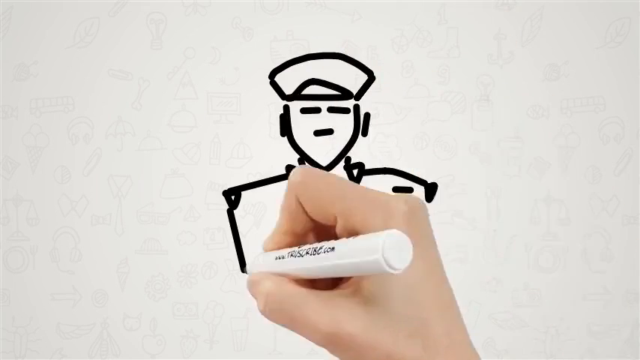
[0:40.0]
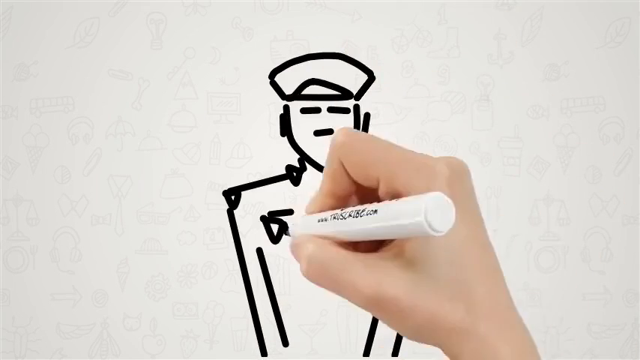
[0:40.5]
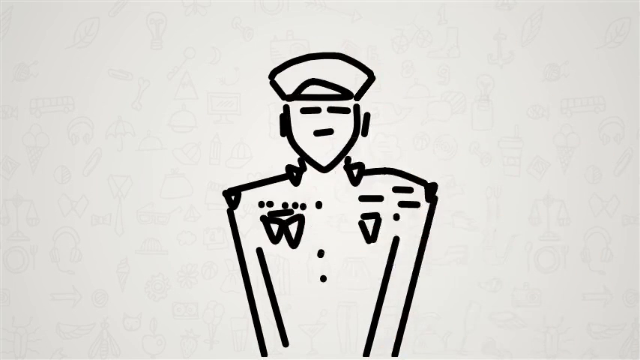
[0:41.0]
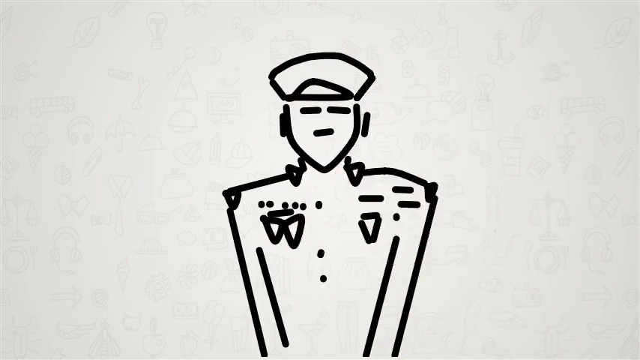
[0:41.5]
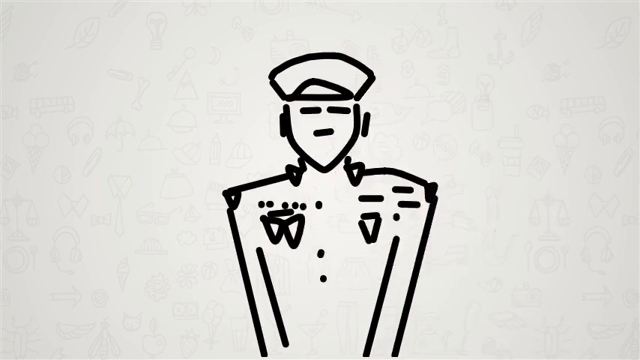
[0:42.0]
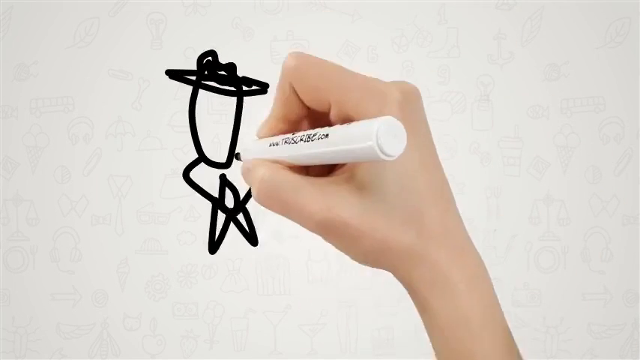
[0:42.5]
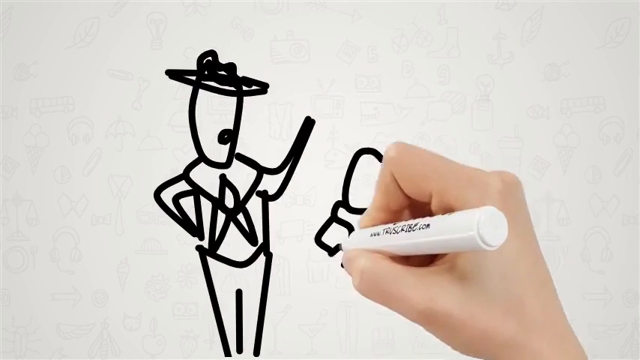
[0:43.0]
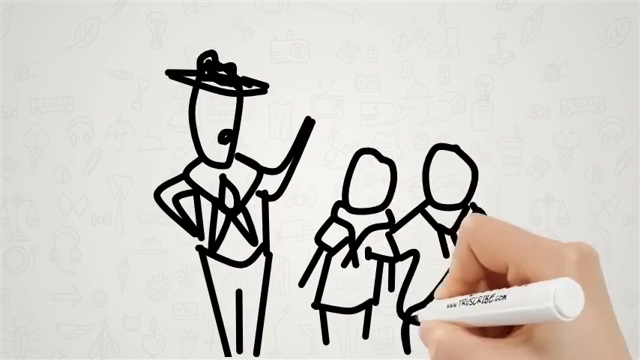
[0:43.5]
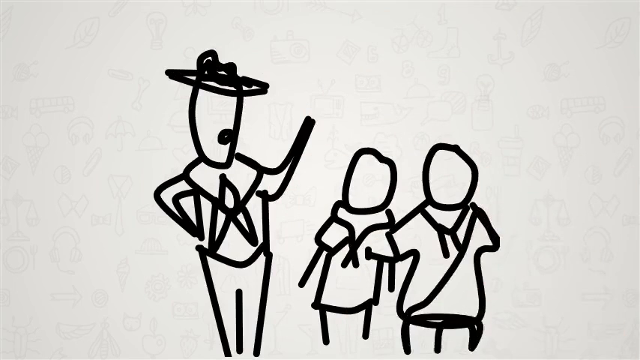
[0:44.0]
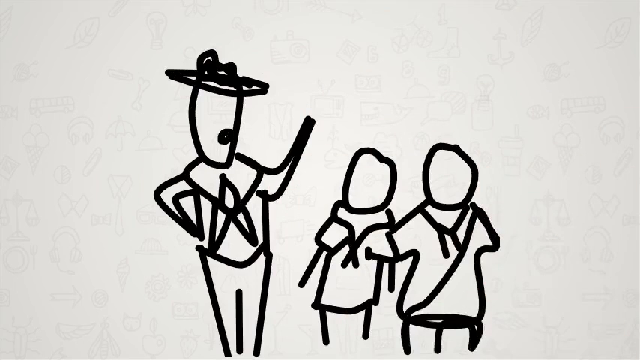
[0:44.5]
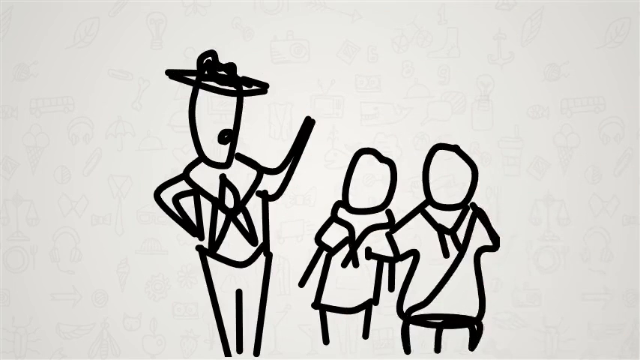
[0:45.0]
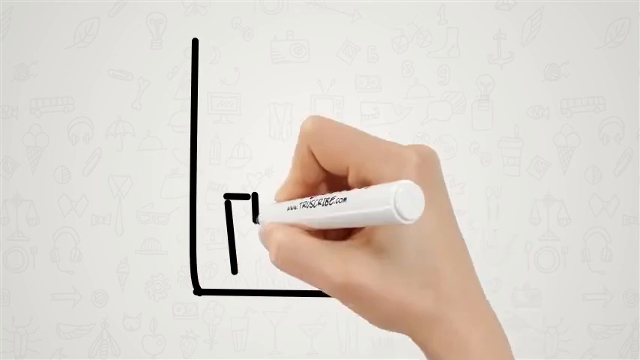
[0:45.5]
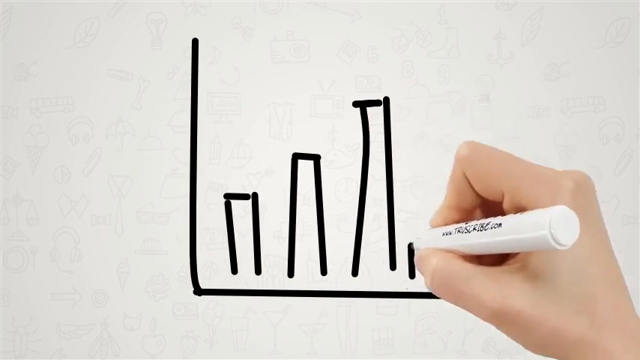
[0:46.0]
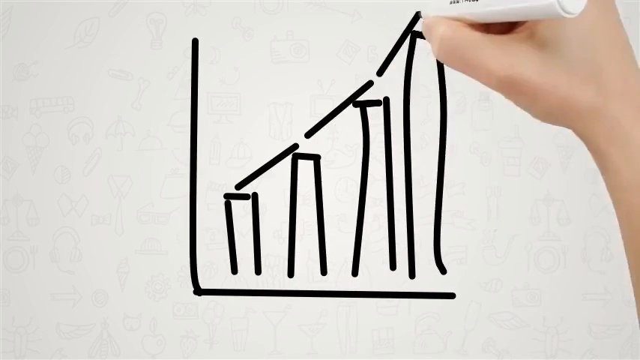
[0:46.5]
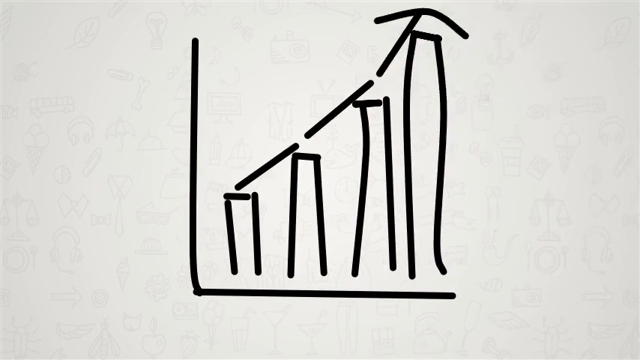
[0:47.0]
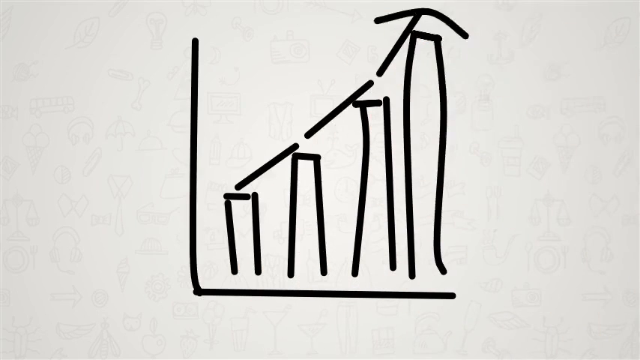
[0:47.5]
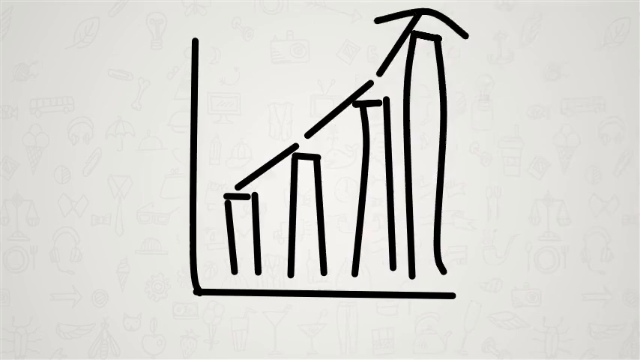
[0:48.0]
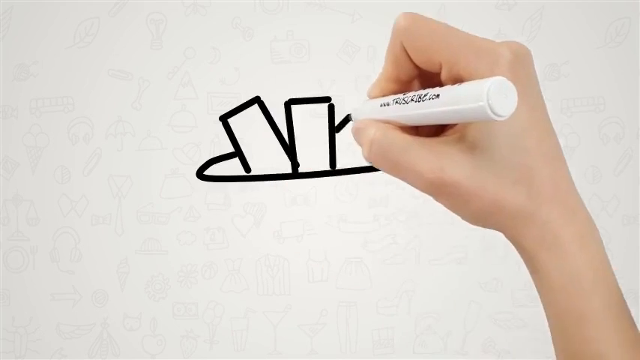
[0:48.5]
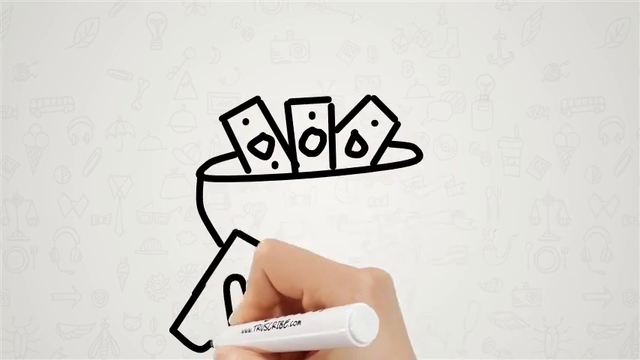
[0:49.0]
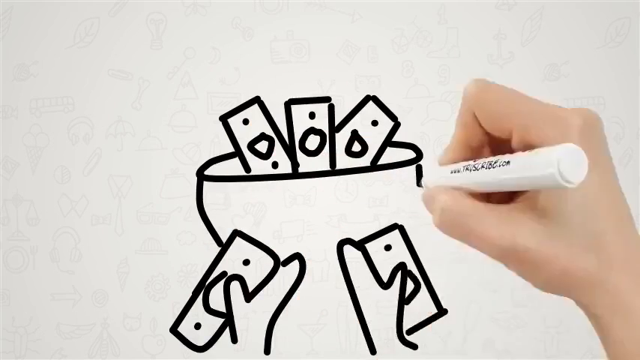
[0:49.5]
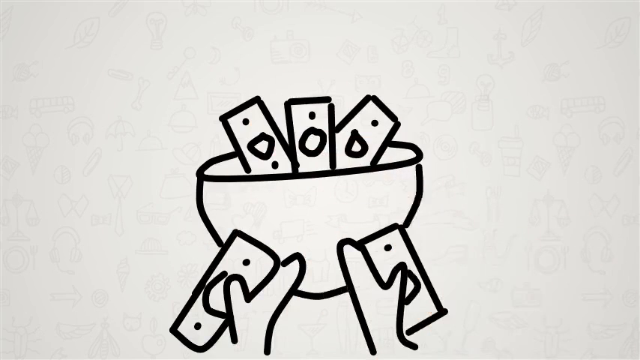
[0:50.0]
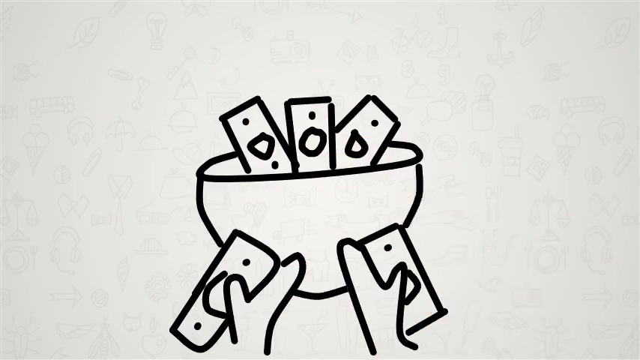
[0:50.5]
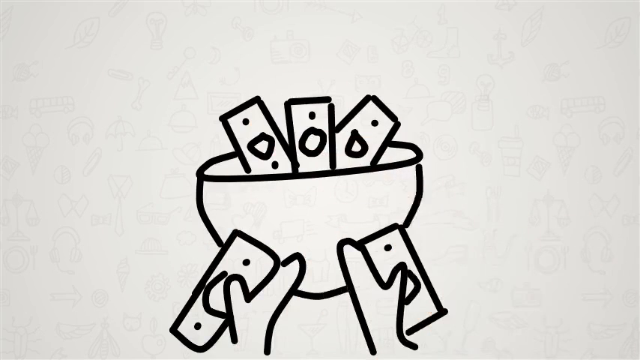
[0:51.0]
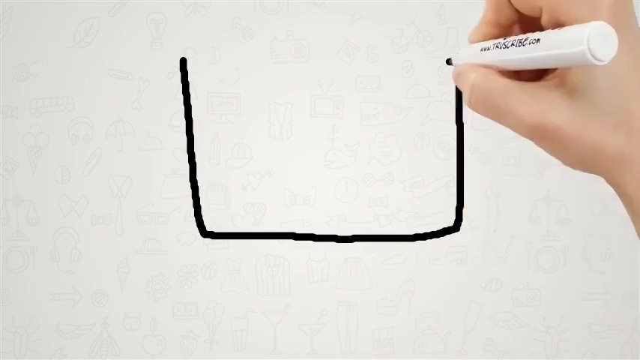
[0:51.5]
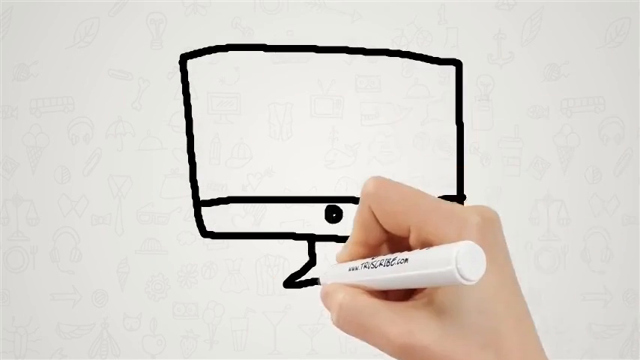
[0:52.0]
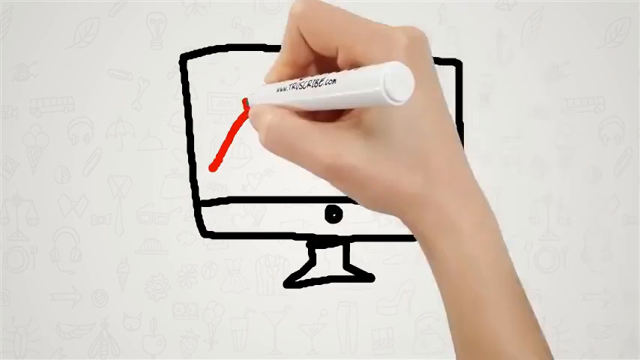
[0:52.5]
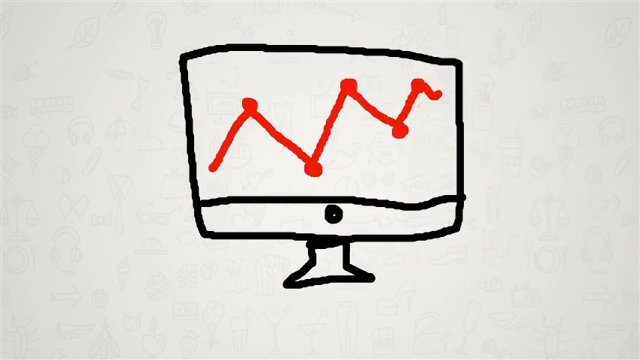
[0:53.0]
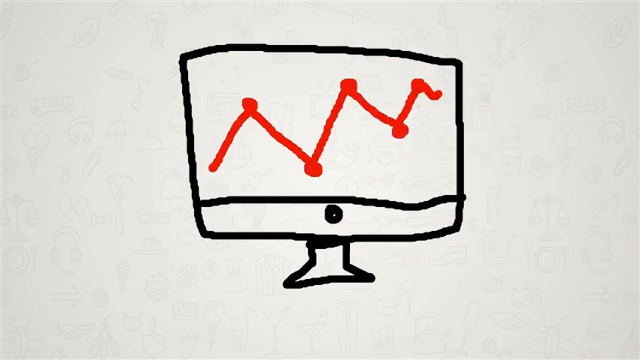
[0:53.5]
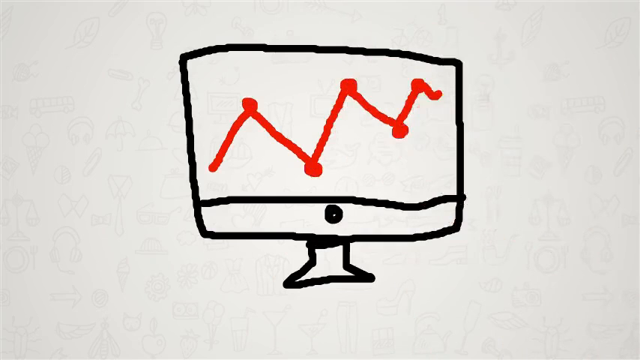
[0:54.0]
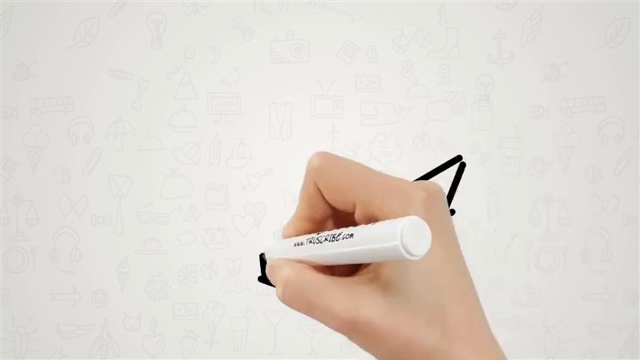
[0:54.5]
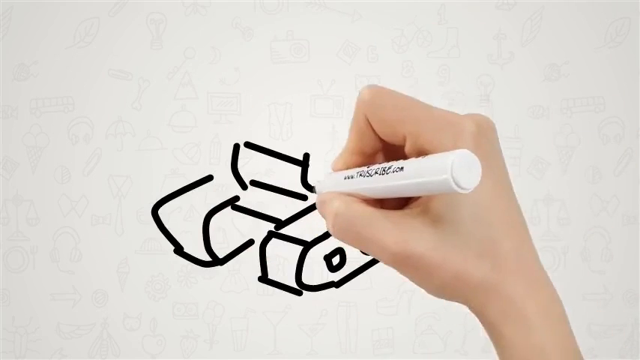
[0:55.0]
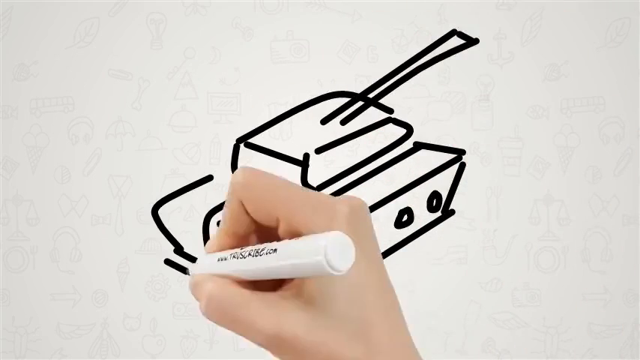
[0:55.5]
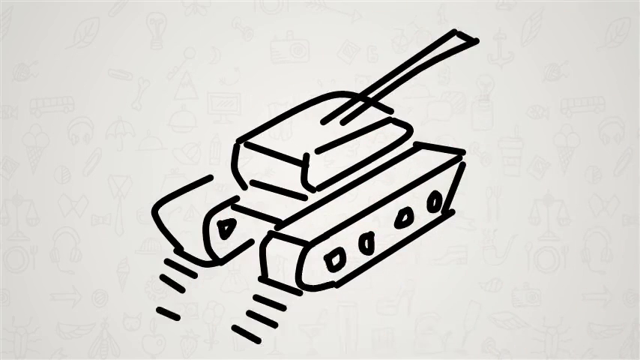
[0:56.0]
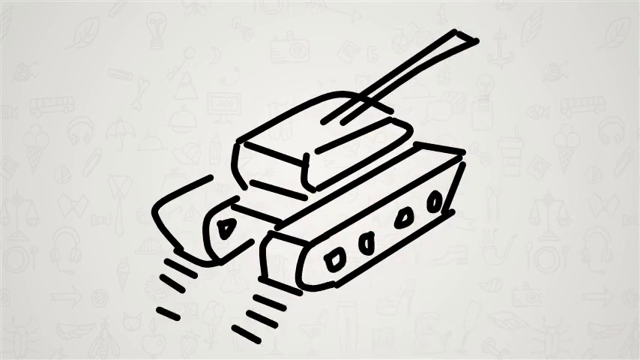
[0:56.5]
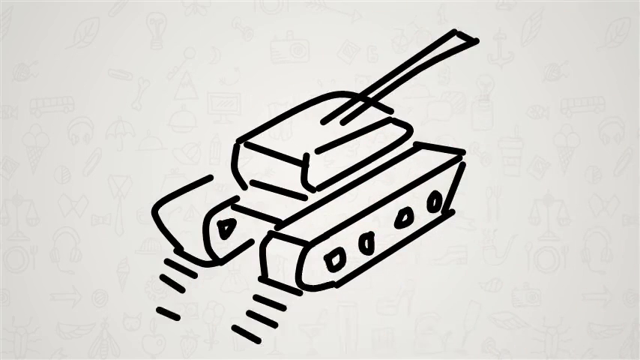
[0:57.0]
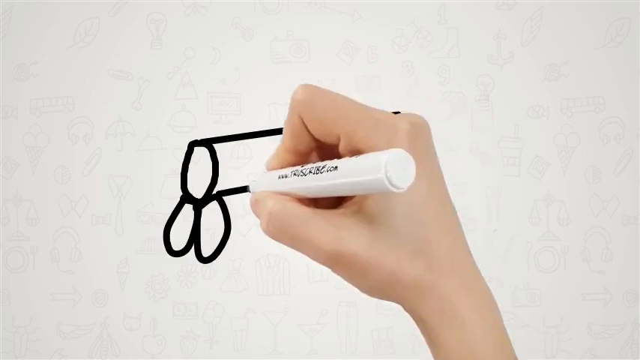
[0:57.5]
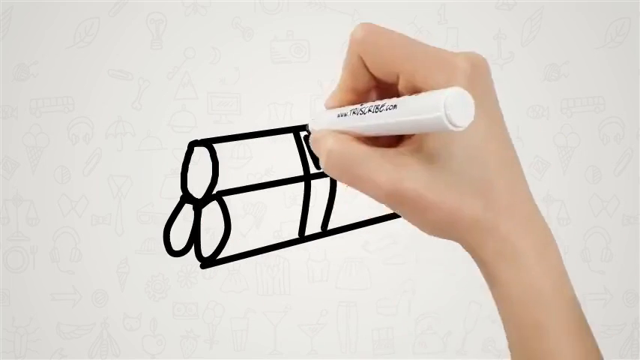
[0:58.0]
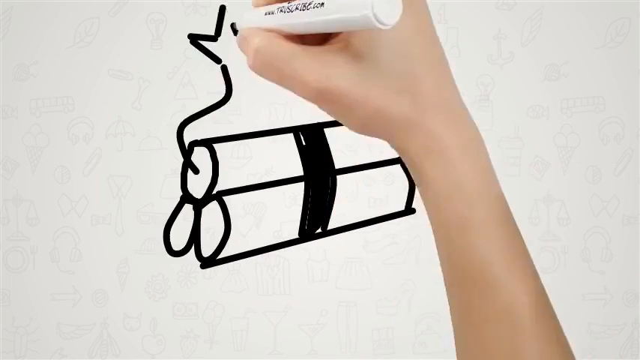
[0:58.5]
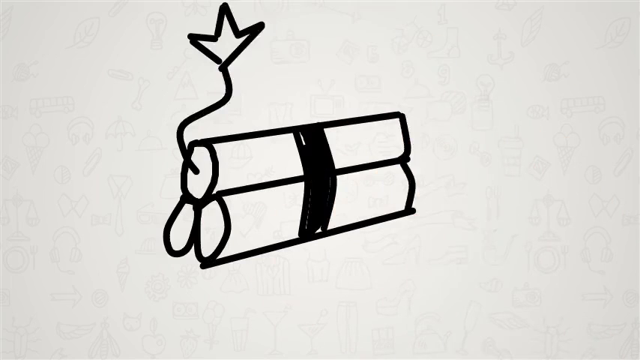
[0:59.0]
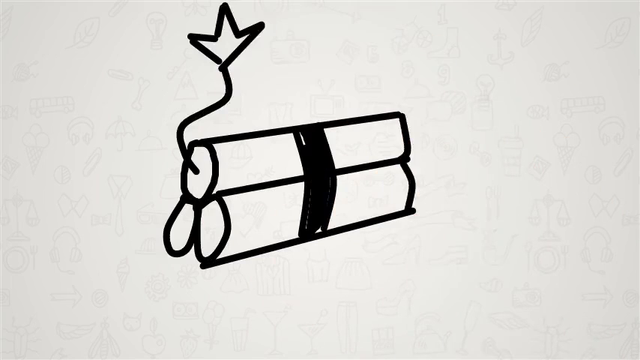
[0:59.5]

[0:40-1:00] On a white background, a white person's hand and part of their arm hold a white pen with black writing on it and black ink, drawing various pictures one by one. First they draw what looks like a man in a uniform with a hat on and three triangular medals attached to him; his two arms and half of his torso are visible. Two lines represent the eyes and one line the mouth, and two lines either side of the curved, pointed head represent the ears. The uniform has nine dots representing buttons and four lines, two large lines go down representing the arms, and the shoulders look very pointed, in a triangular shape. Next is a drawing of what looks like two children on the right and one man on the left, all appearing to be dressed like Scouts. The man, in what looks like a Scout uniform, has one arm on his waist and one arm in the air and is in front of the two children, who are shorter than him; he appears to be communicating with them. He wears a curved hat like a ranger would wear, what looks like a neckerchief and what look to be trousers, and the two children wear a similar uniform. Then comes what looks to be a graph: an L-shaped line containing four bar chart columns that increase in size from left to right, with an arrow made of three separate lines going upwards above the long rectangular columns, following them. Next is a drawing of what looks to be a bowl holding three items that almost look like TV remotes of some kind; the first has two dots and a circle, and the other two have a circle and one dot. In front of the bowl, two hands hold similar rectangle-shaped items with circles in the middle: the one on the left has a dot at the top and the bottom of the circle, and the one on the right has a single dot and circle above one another, like the ones in the bowl.